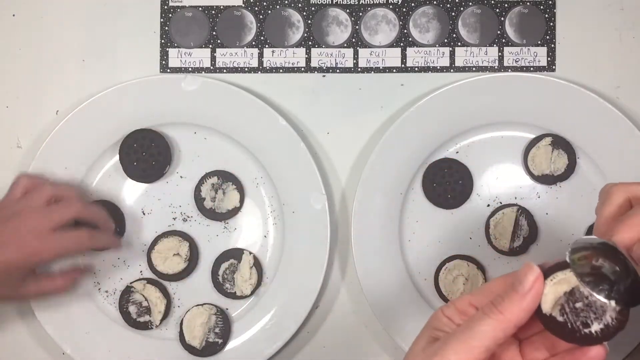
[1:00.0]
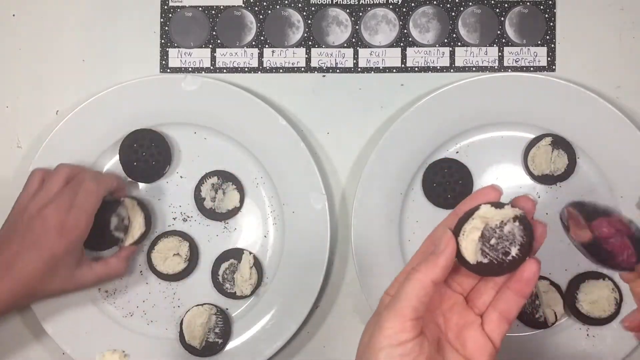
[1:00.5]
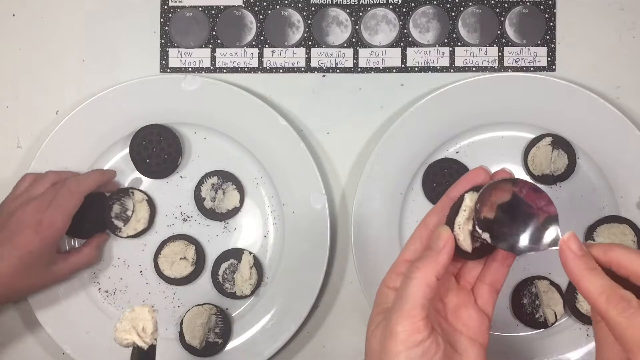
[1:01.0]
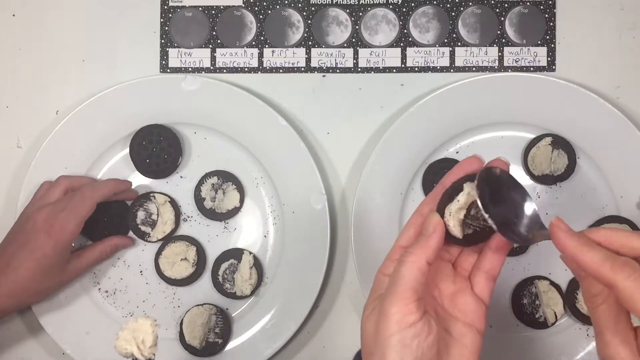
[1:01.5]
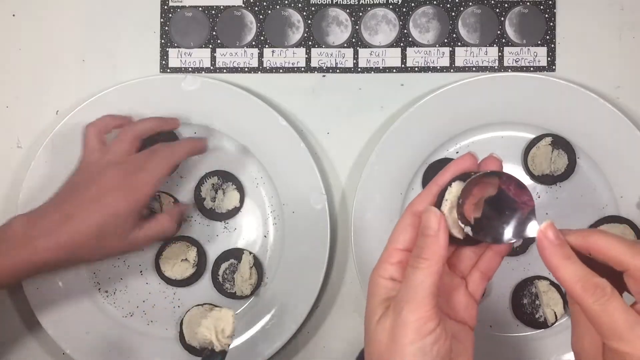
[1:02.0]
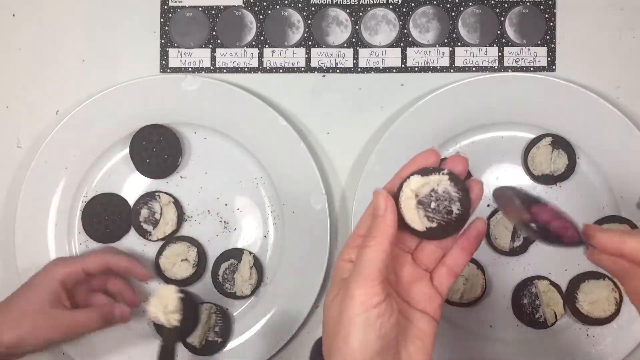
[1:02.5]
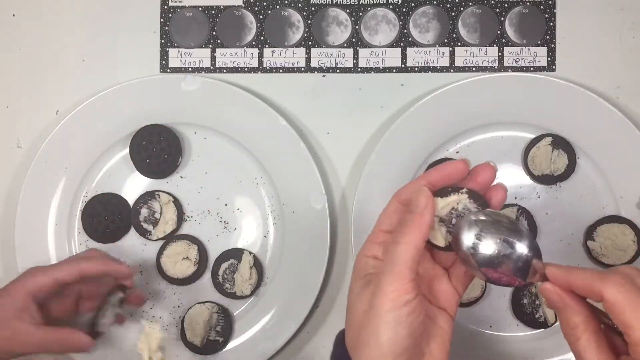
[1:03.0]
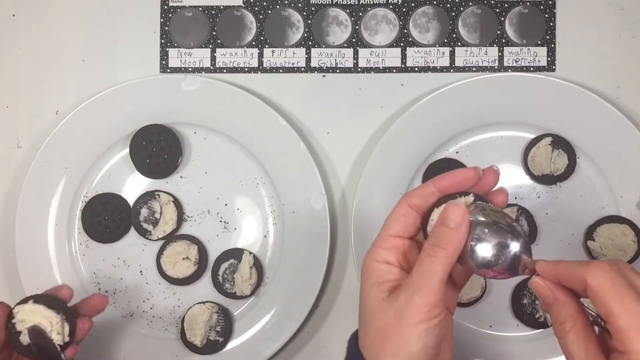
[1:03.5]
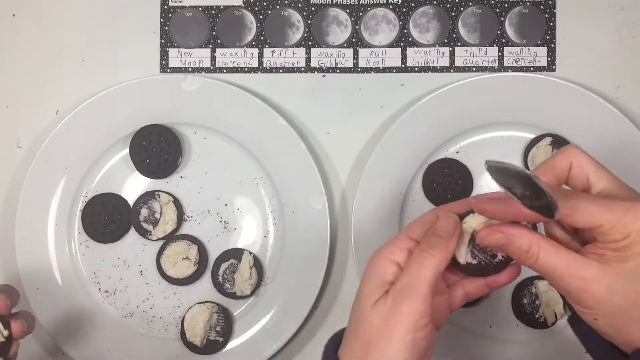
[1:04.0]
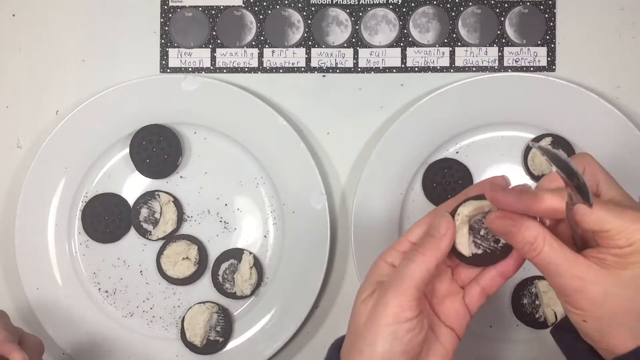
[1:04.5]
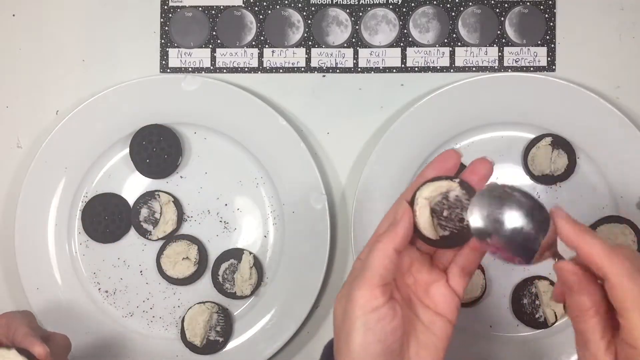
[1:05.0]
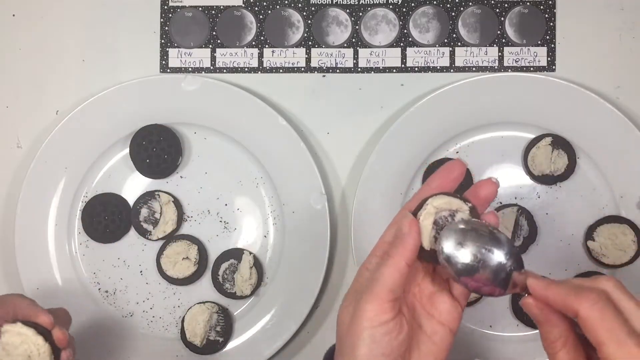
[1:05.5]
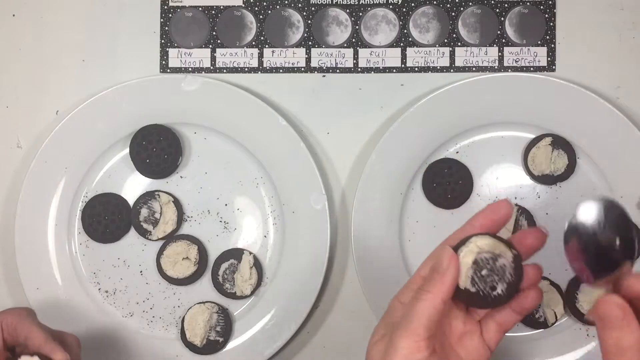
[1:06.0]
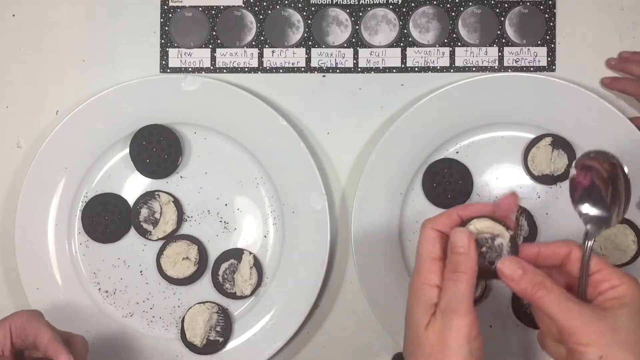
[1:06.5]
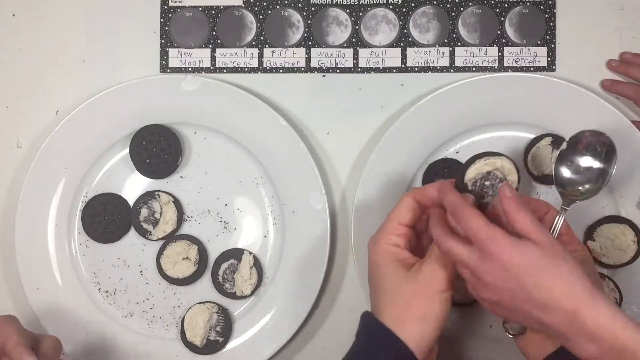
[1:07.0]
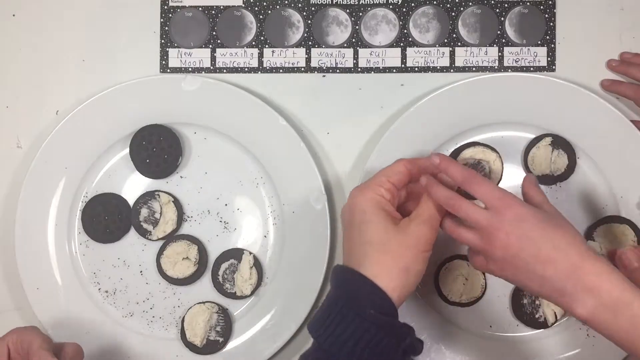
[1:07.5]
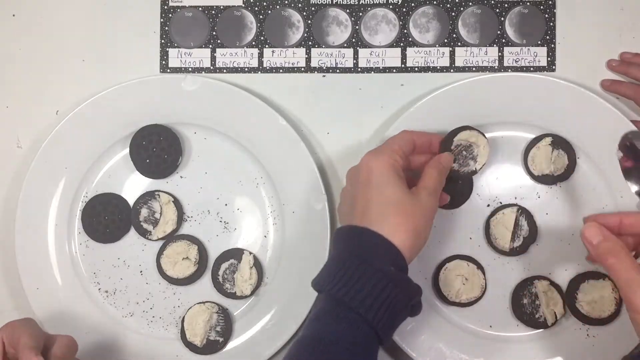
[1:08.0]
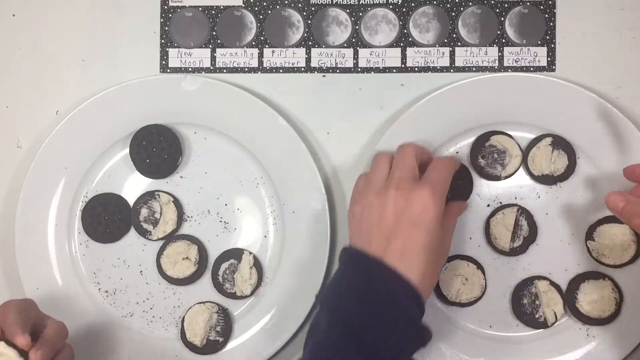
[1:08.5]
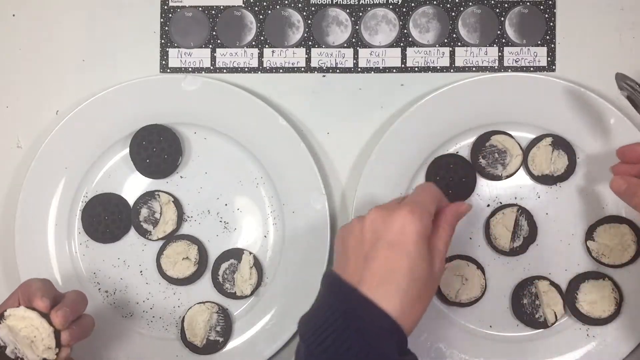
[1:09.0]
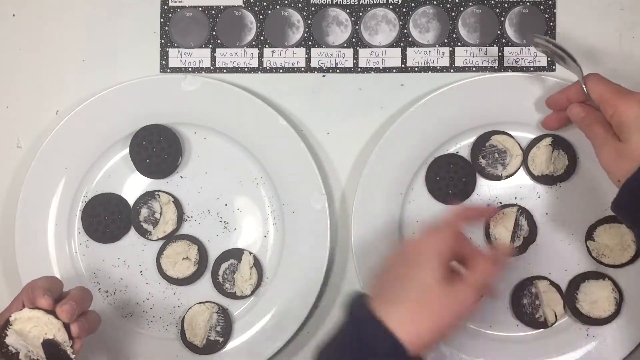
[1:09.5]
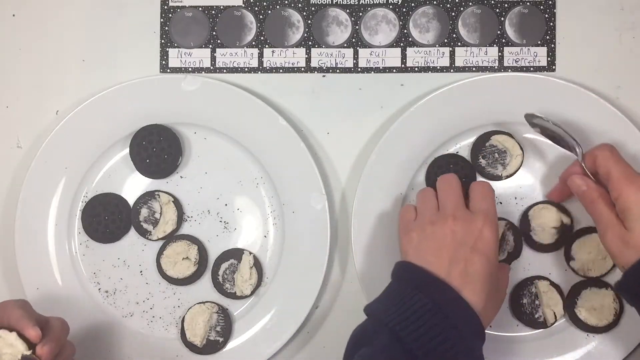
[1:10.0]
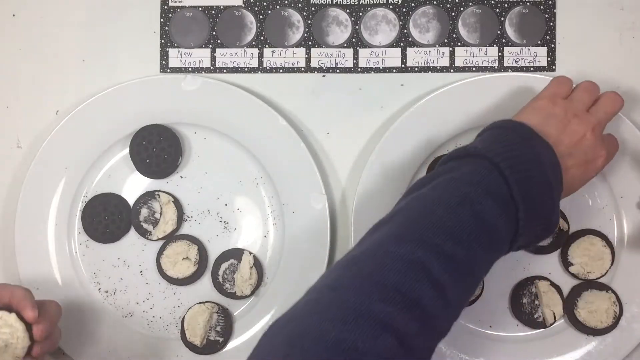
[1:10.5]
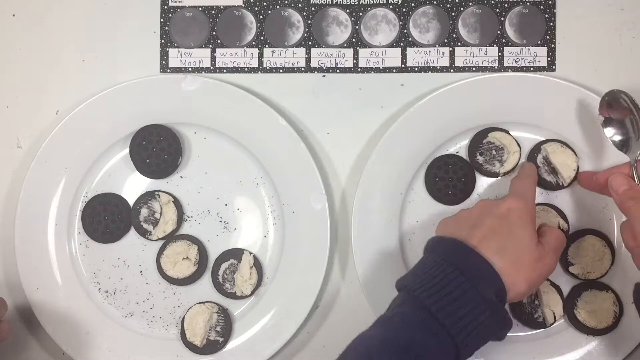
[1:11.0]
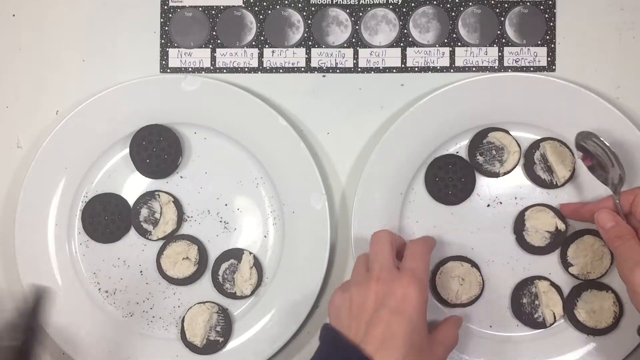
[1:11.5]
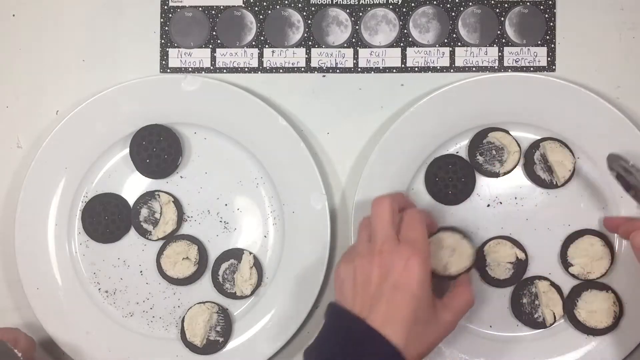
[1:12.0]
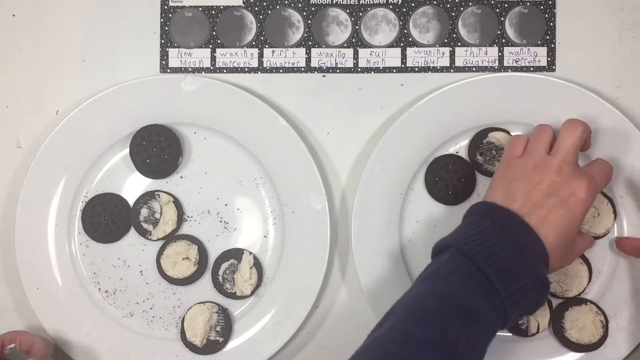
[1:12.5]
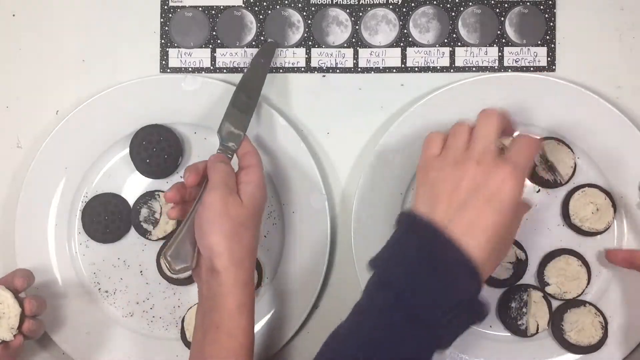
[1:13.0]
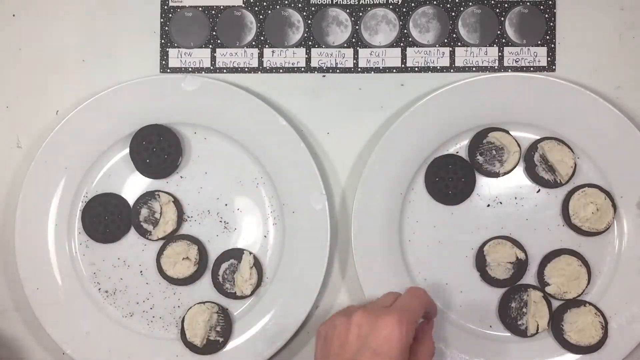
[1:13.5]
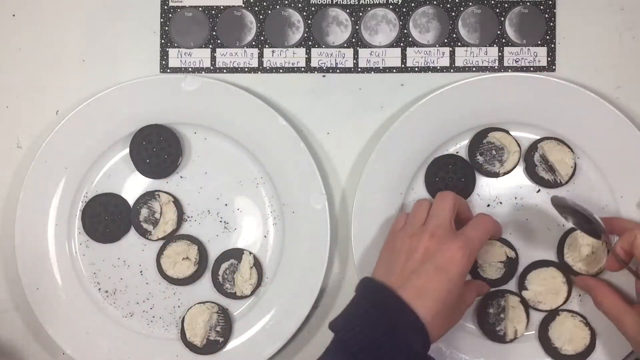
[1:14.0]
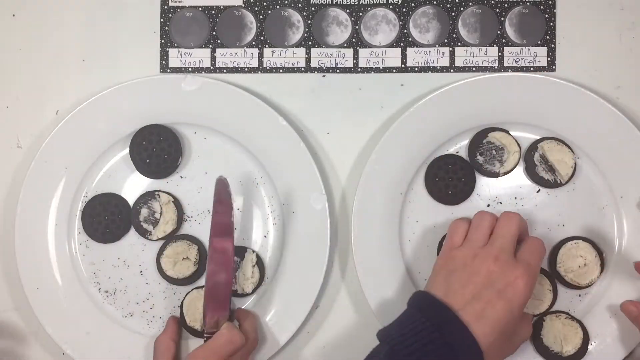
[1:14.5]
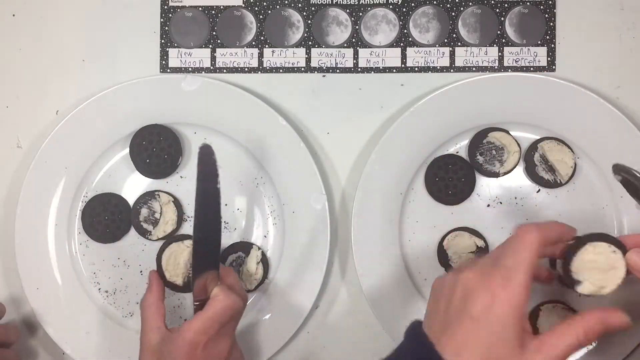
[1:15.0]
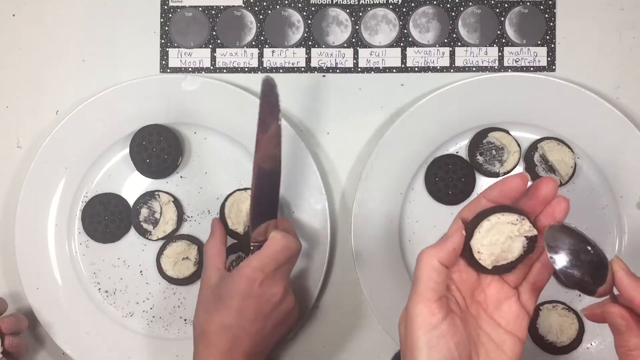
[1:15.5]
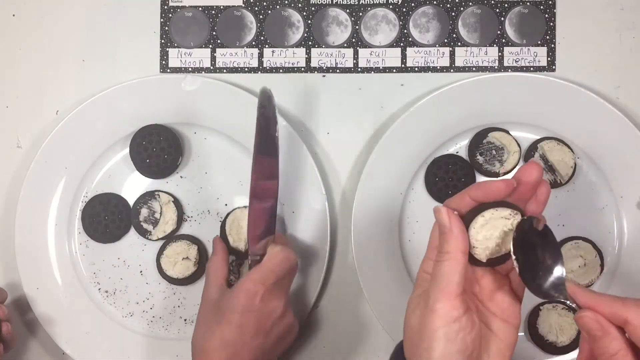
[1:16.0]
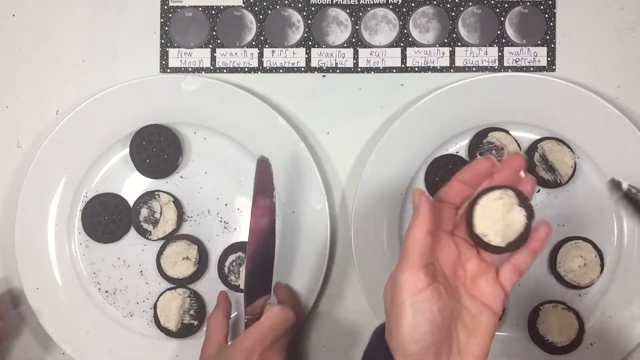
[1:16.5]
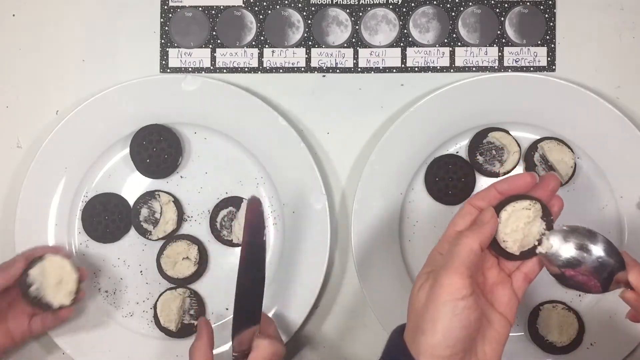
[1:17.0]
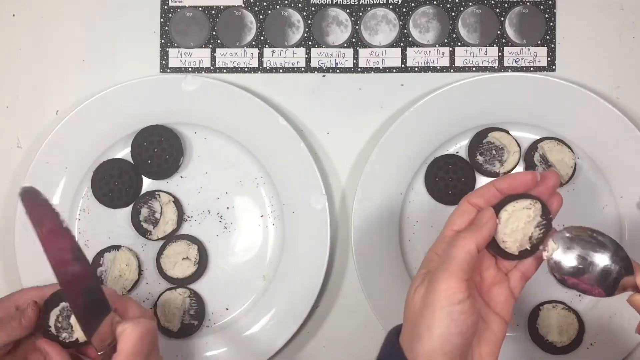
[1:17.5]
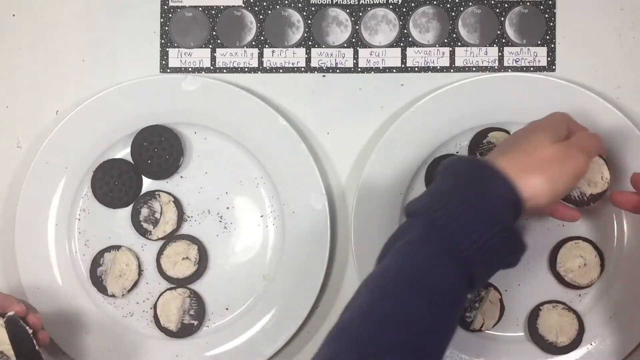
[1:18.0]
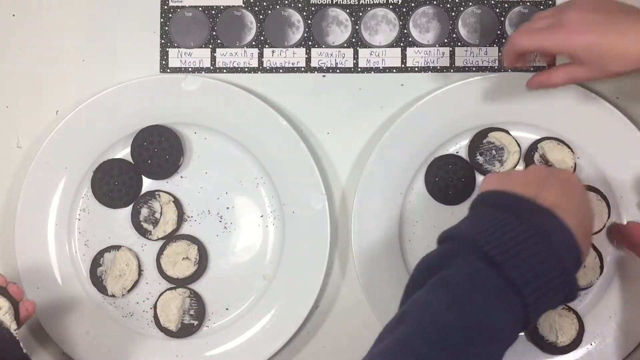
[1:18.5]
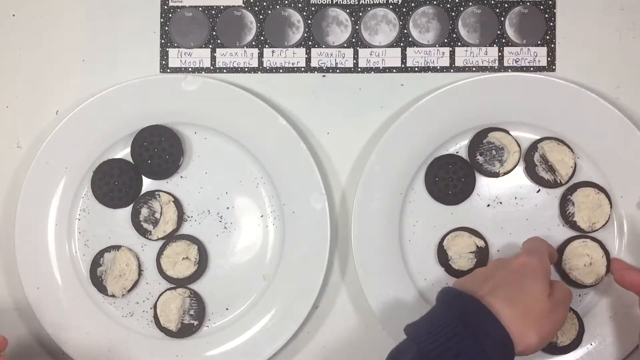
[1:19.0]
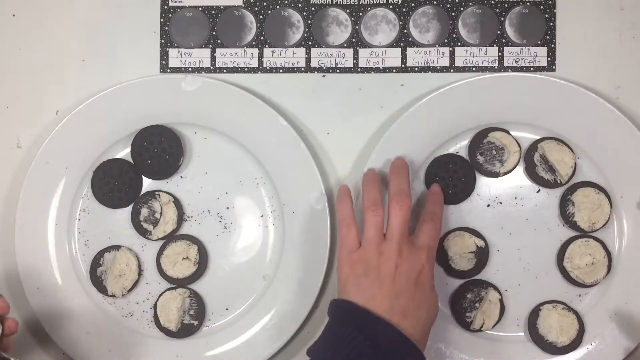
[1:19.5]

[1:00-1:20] The scraping of different amounts of frosting off the open cookie halves continues, apparently to simulate the moon phases. The person on the right holds a cookie in the left hand and a spoon in the right, scraping off different amounts of frosting or filling, and sometimes reaches in with their hand to form the frosting into what looks to be the different shapes of the moon. The other person seems to be following suit but has not made as much progress; they are still mostly opening cookies and are beginning to scrape away at the frosting as well. The person on the right seems to be a little ahead, while the person on the left is still working. The frosting left on the cookies is starting to form what look to be shapes similar to the phases of the moon.